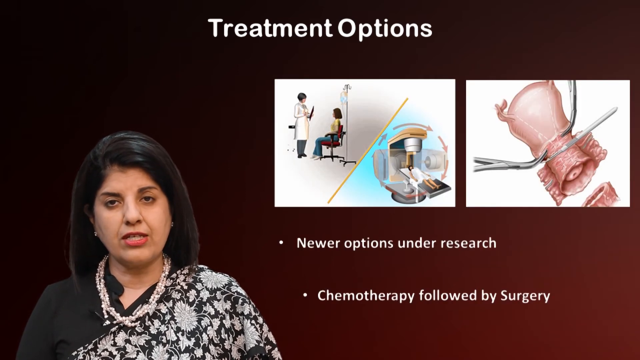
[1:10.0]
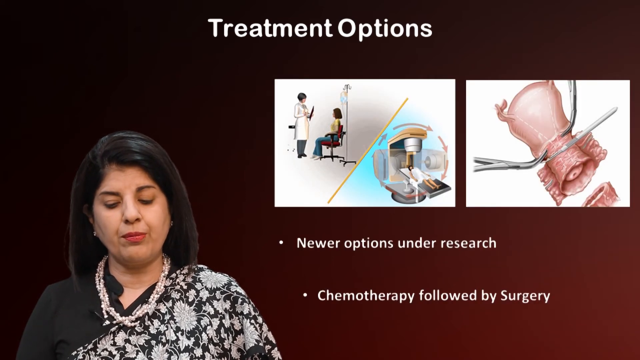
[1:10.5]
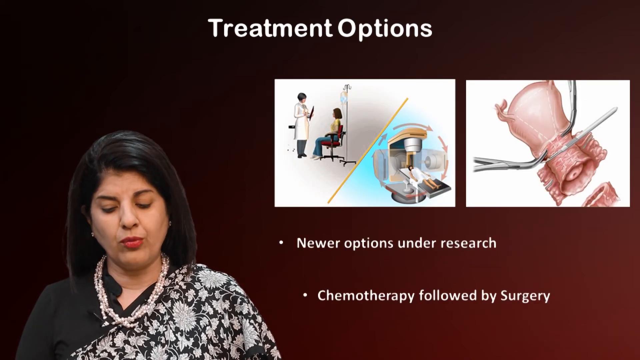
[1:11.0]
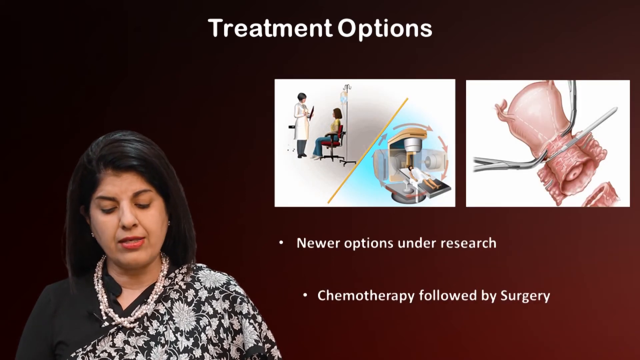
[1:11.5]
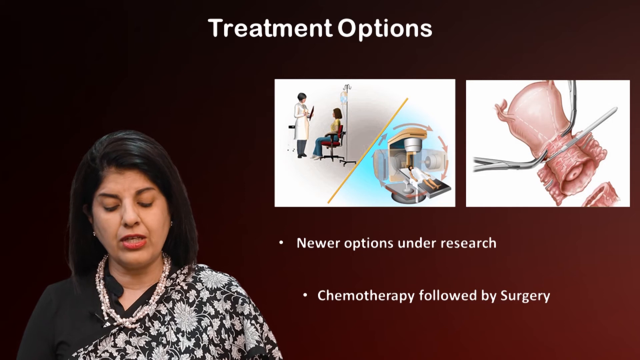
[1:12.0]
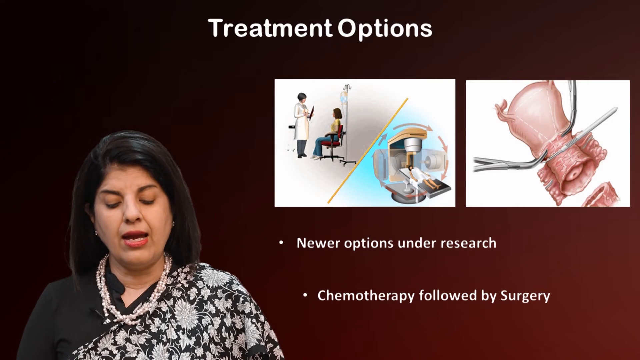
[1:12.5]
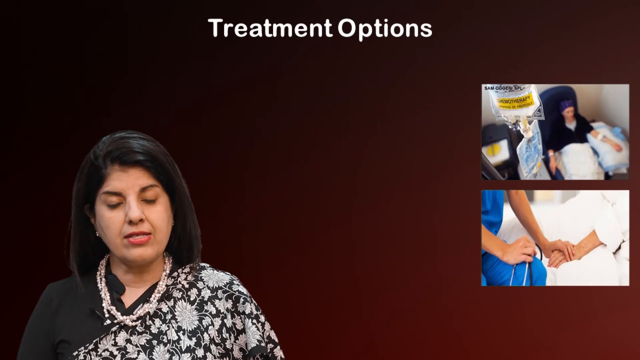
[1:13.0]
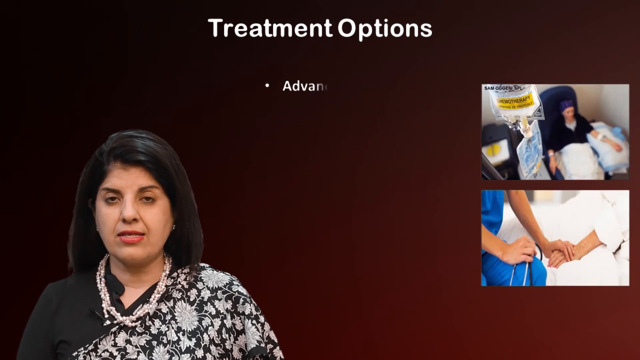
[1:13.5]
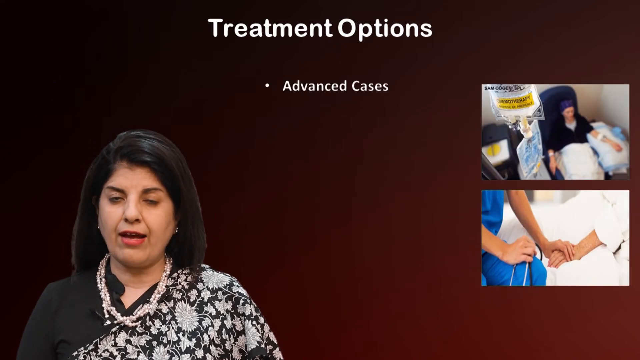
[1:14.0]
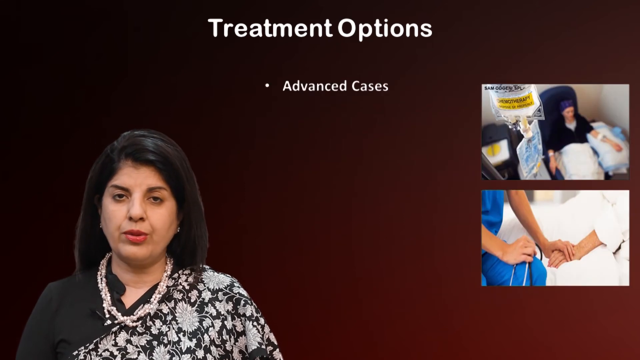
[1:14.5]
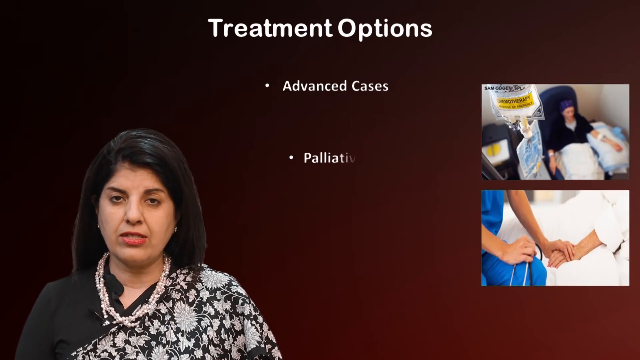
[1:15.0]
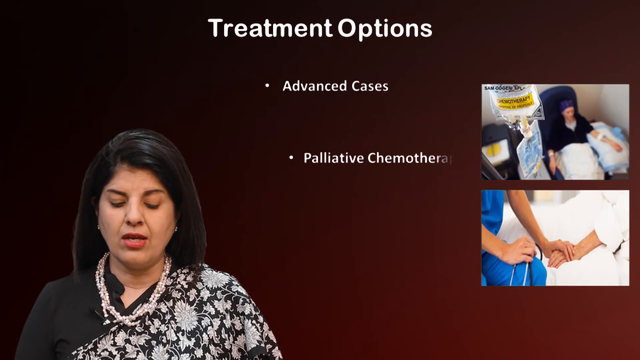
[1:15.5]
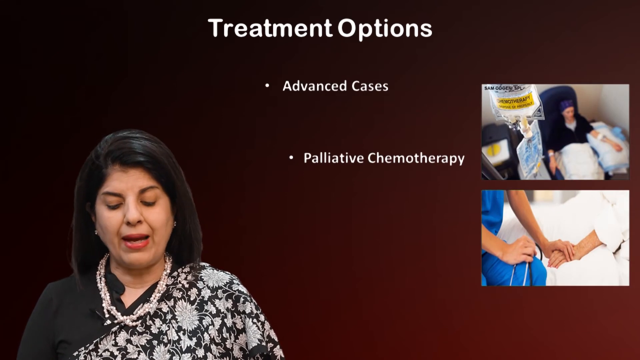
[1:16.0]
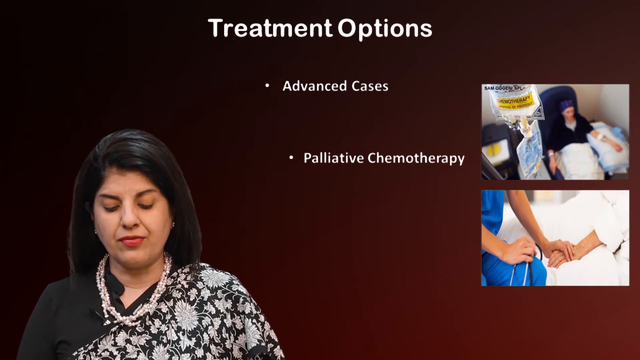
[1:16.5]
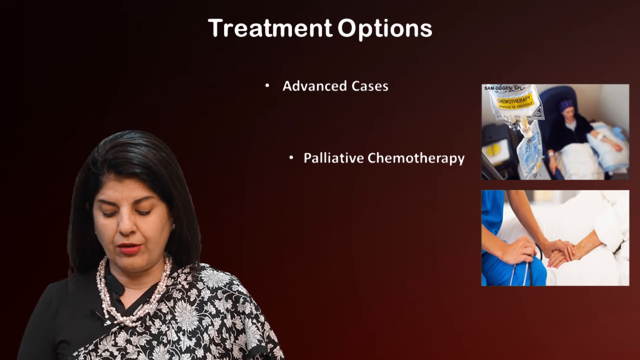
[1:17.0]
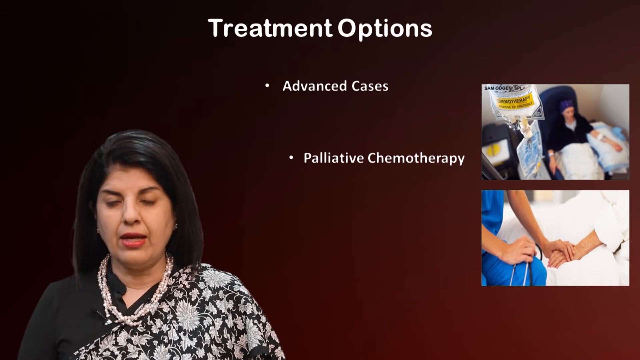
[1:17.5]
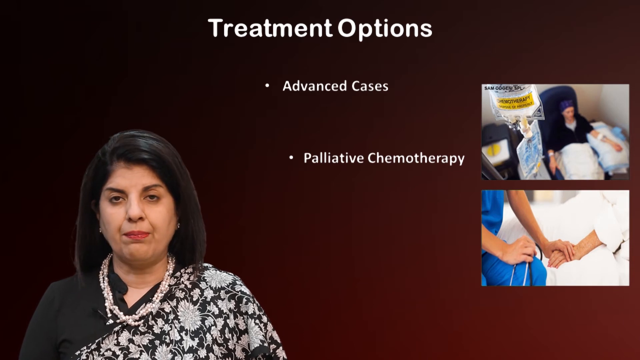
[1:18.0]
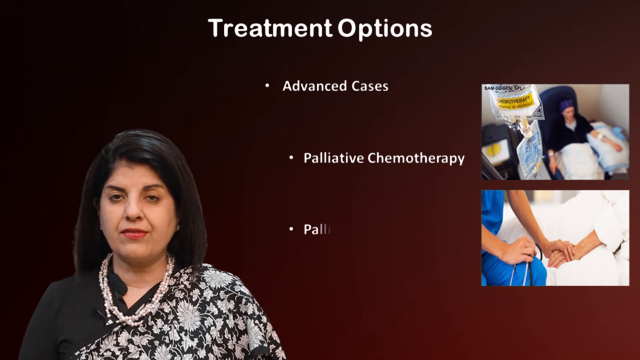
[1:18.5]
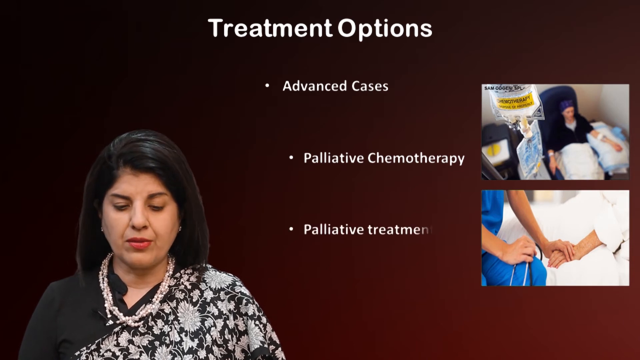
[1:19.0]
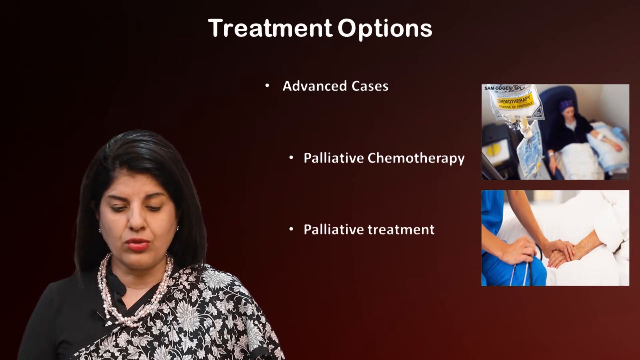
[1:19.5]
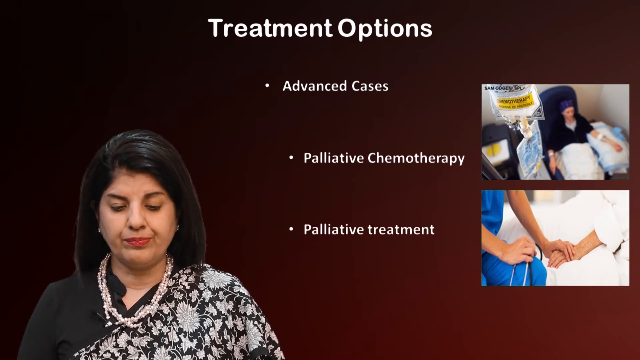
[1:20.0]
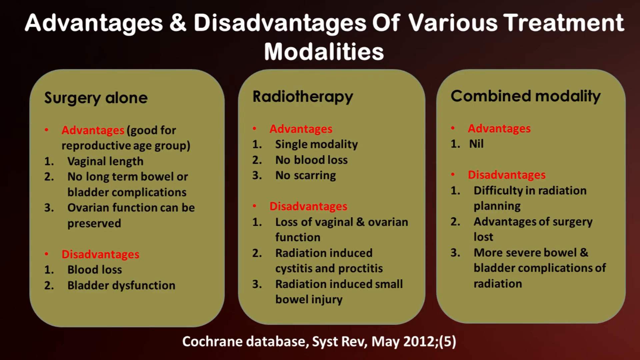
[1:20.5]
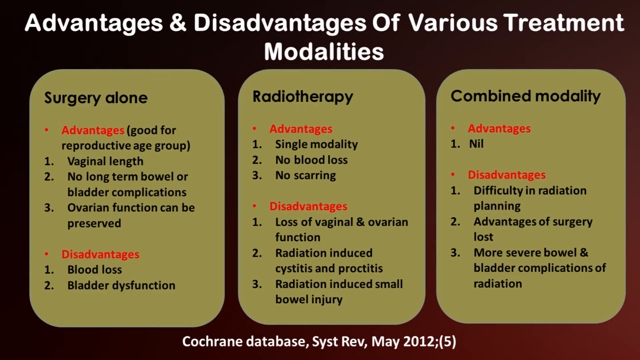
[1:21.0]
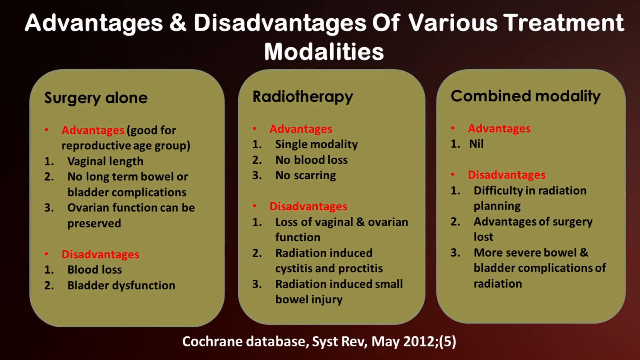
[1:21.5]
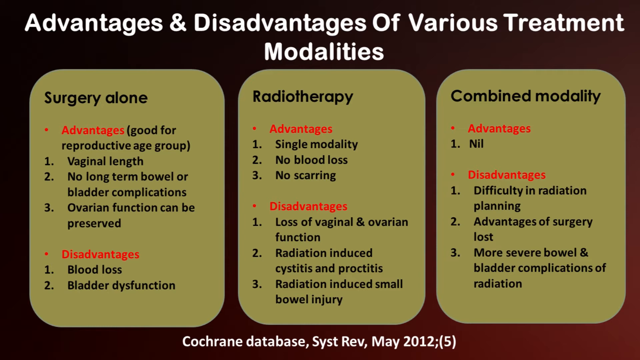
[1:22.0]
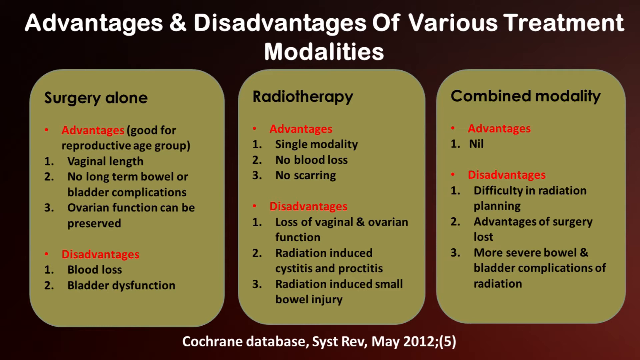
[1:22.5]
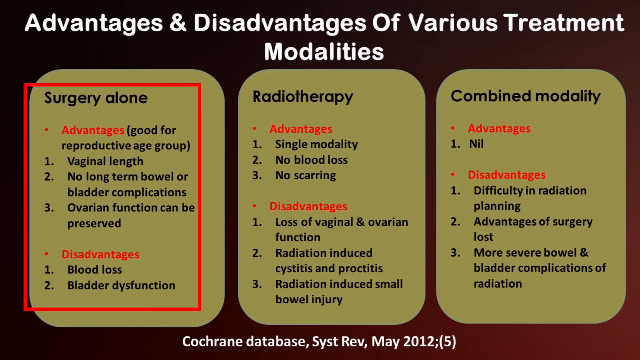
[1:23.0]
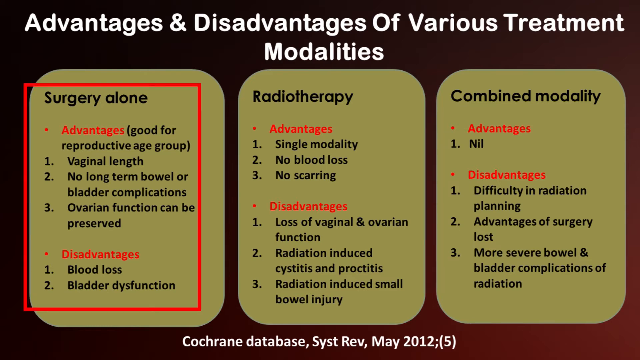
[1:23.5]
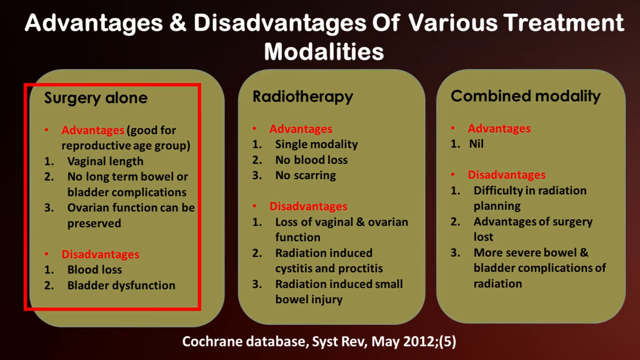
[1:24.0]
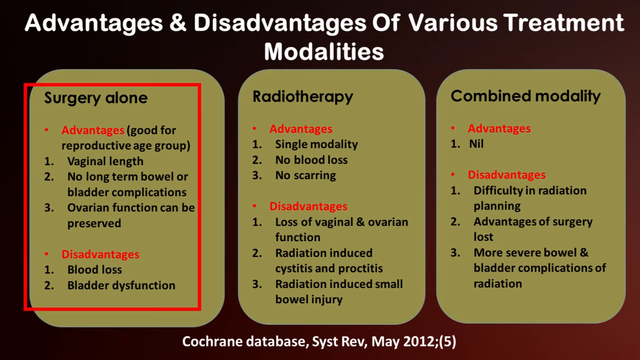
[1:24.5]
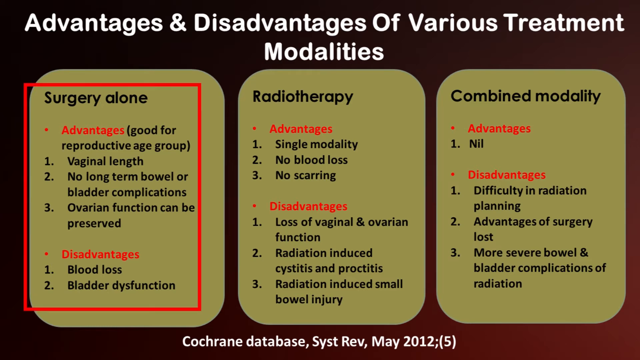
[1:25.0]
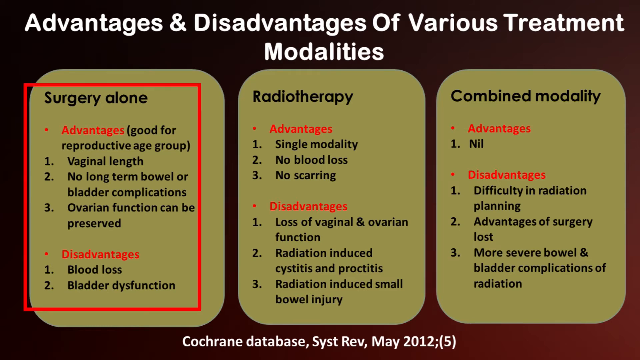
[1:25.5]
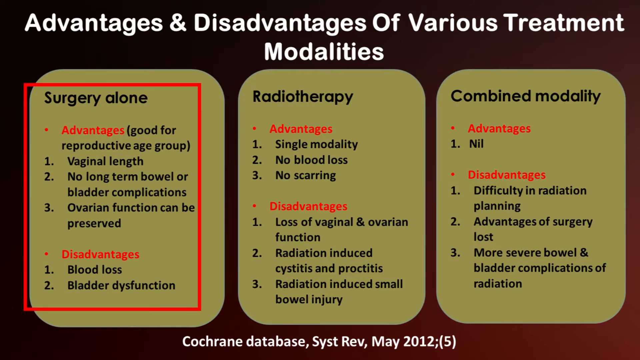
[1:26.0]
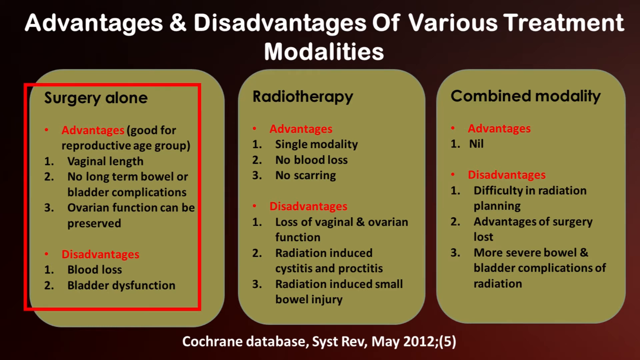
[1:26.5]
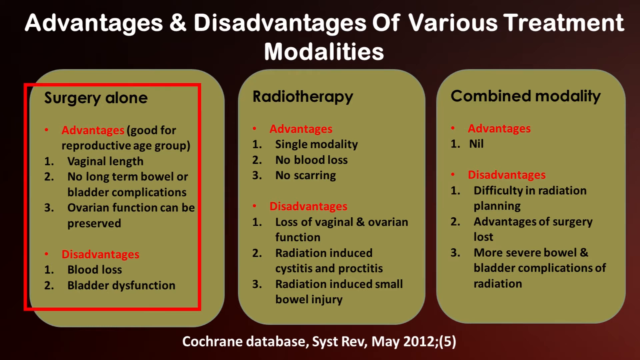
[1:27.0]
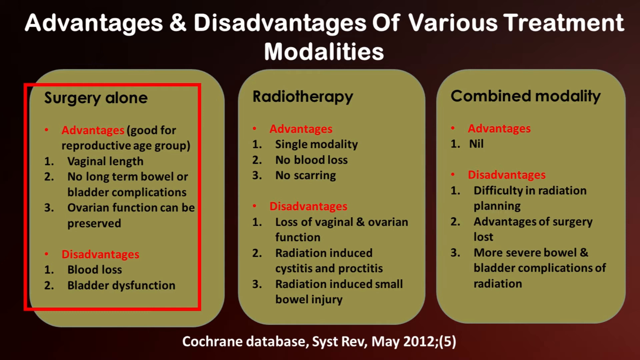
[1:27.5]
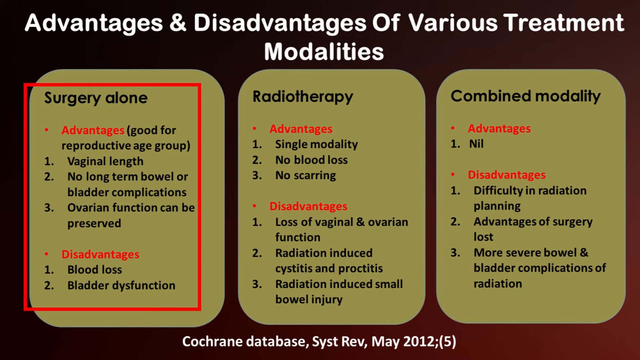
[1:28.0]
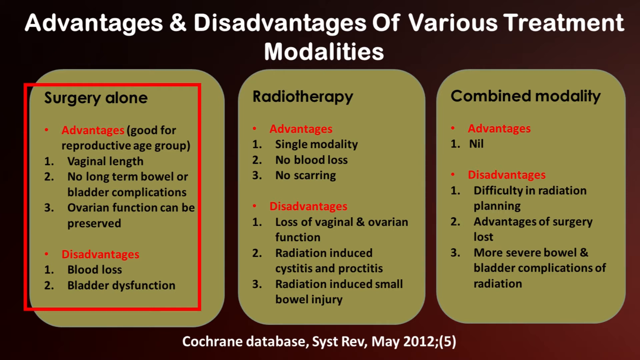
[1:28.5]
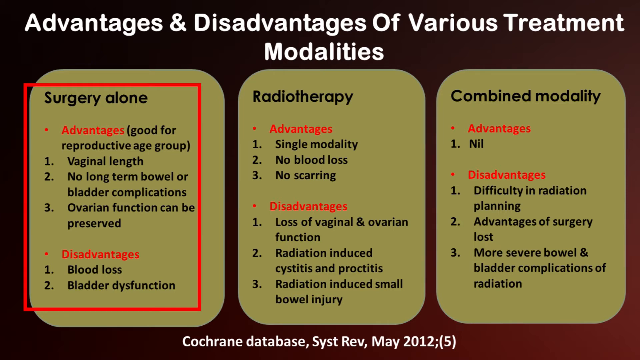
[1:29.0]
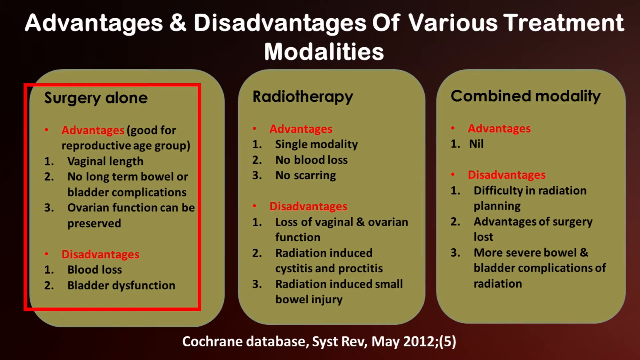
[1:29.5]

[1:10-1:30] The video moves on to treatment options. The woman is on the left, with dark hair, a necklace and a black and white blouse with flowers on it. To the right, at the top in bold white letters, are the words "treatment options". Below are two pictures depicting different types of treatment. On the left, a doctor appears to be talking to a woman, and it shows her being sent under some sort of scan. On the right is an unidentified illustration of a part of a body where an area appears to be clamped off. Underneath, text says "newer options under research, chemotherapy followed by surgery", followed by content on advanced cases and chemotherapy. Then the screen changes to "advantages and disadvantages of various treatment modalities" in bold white text on a black screen with three yellow bubbles of text.